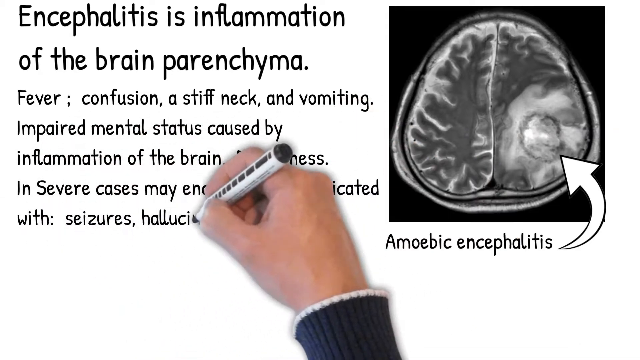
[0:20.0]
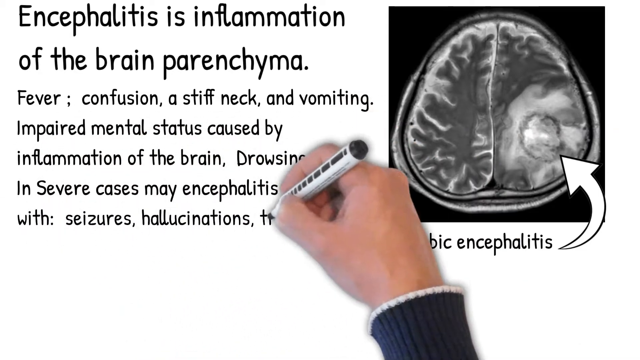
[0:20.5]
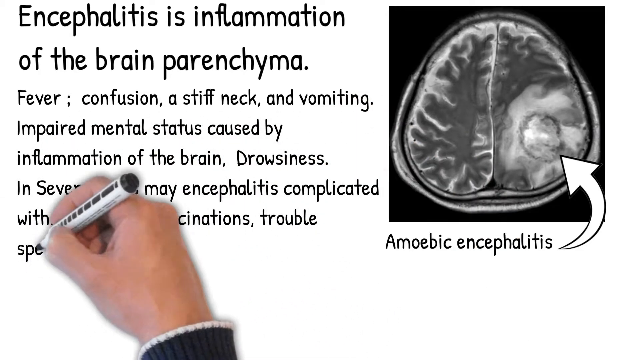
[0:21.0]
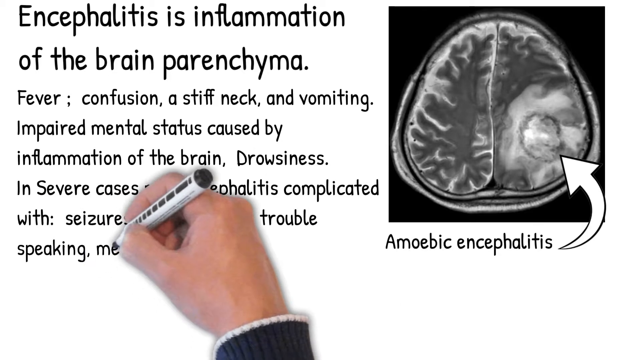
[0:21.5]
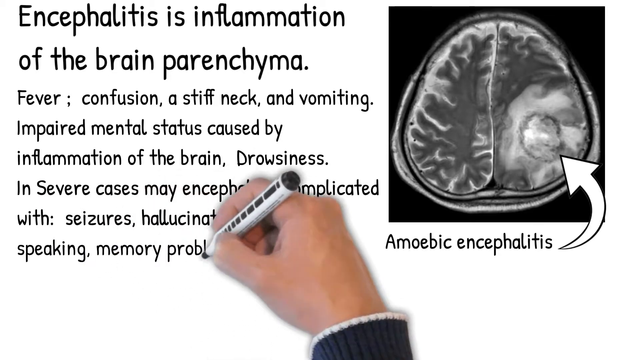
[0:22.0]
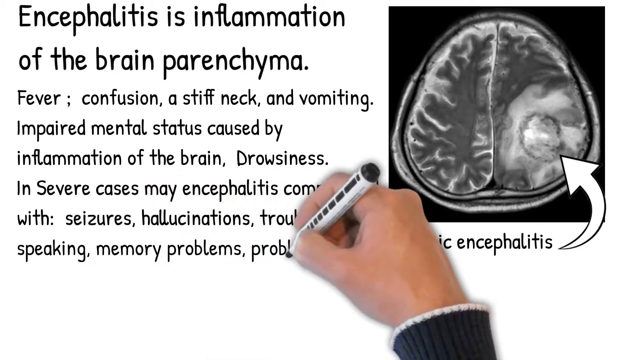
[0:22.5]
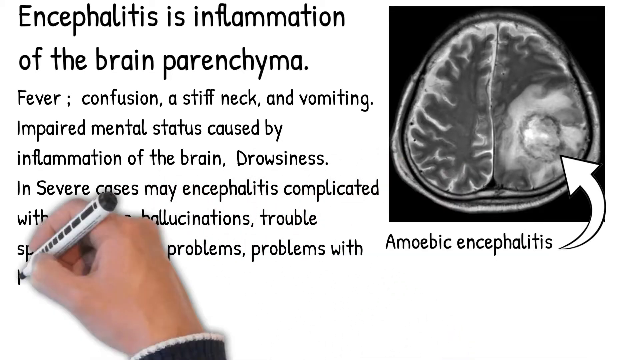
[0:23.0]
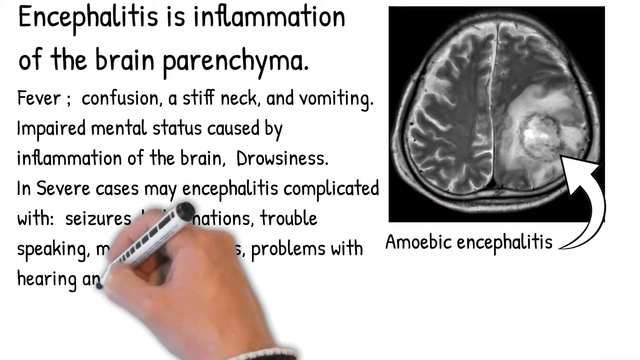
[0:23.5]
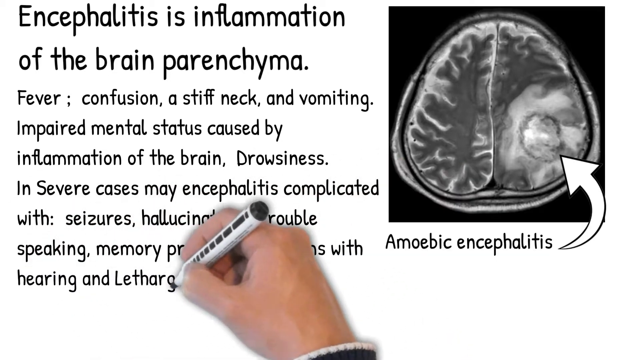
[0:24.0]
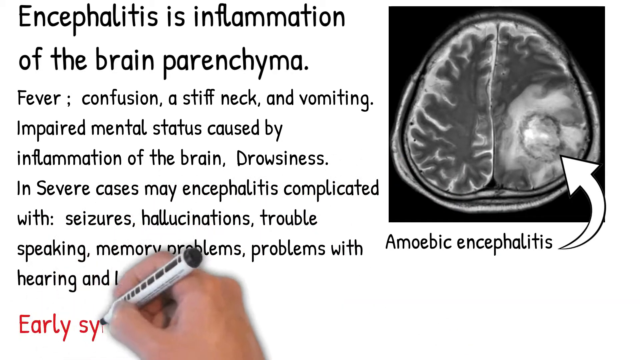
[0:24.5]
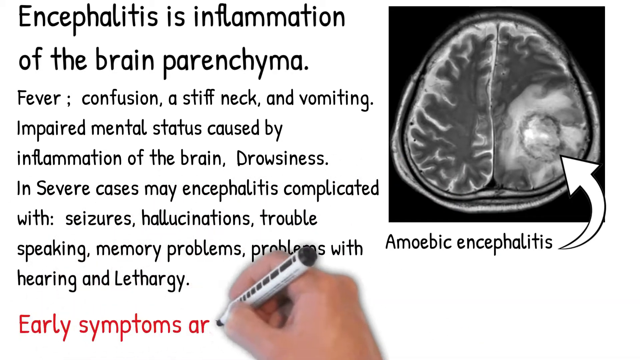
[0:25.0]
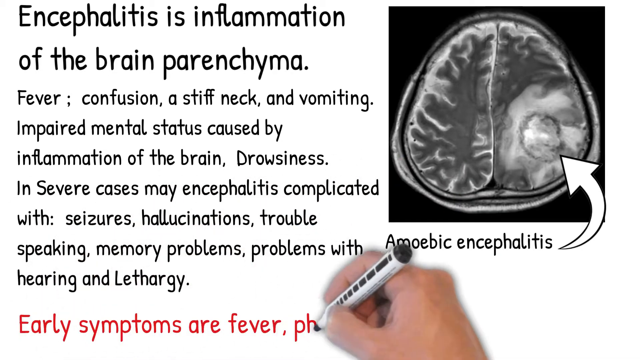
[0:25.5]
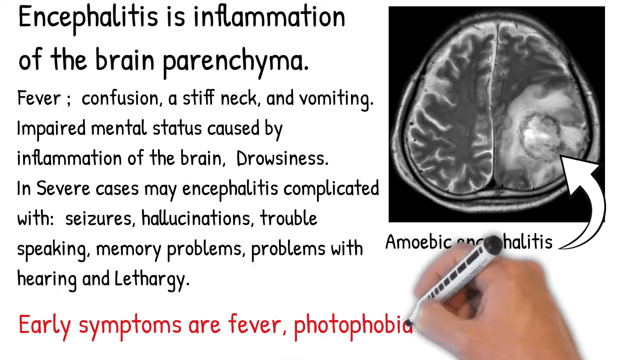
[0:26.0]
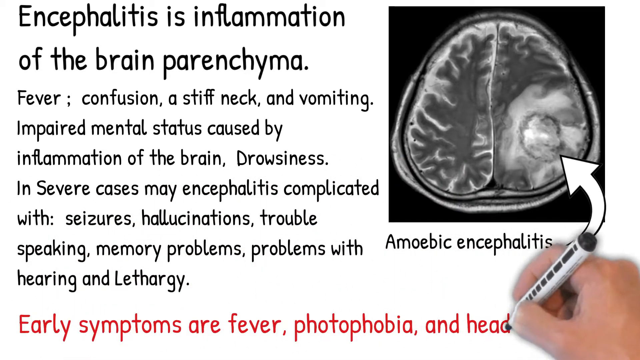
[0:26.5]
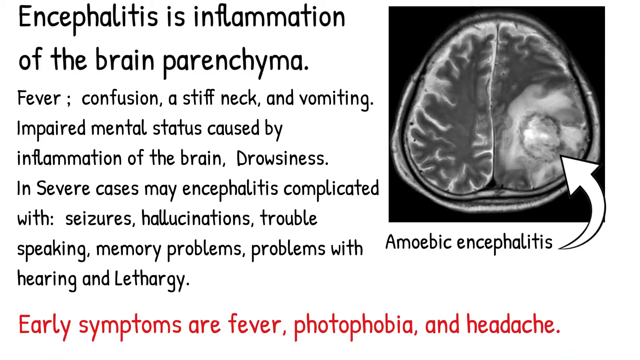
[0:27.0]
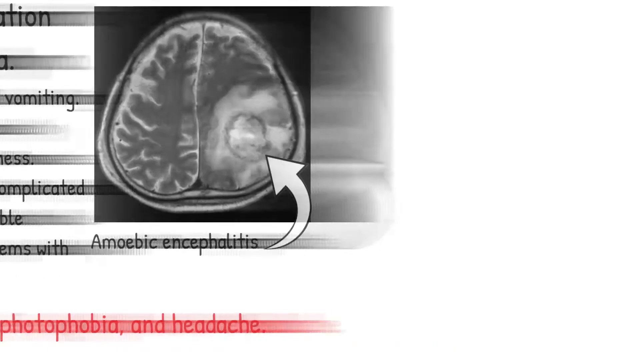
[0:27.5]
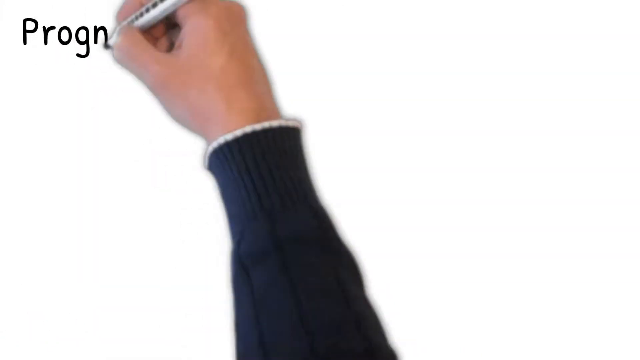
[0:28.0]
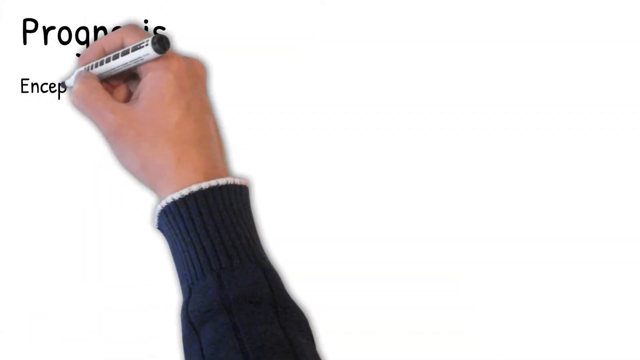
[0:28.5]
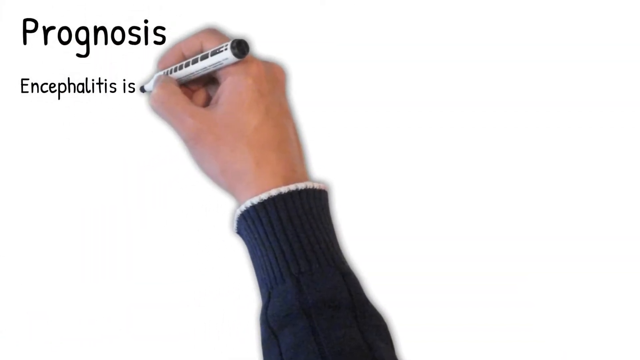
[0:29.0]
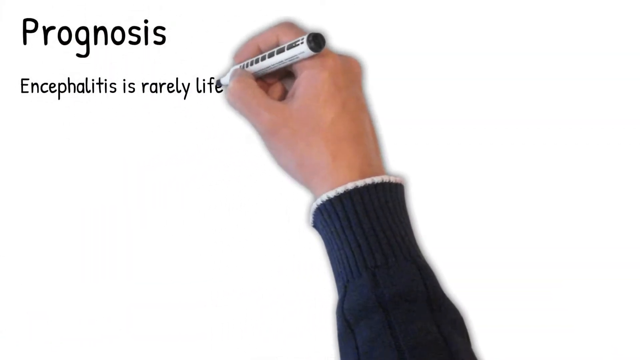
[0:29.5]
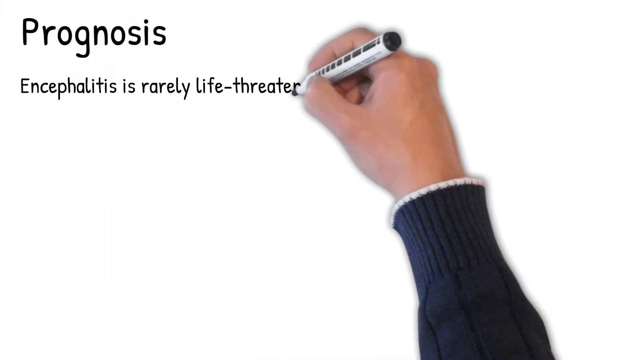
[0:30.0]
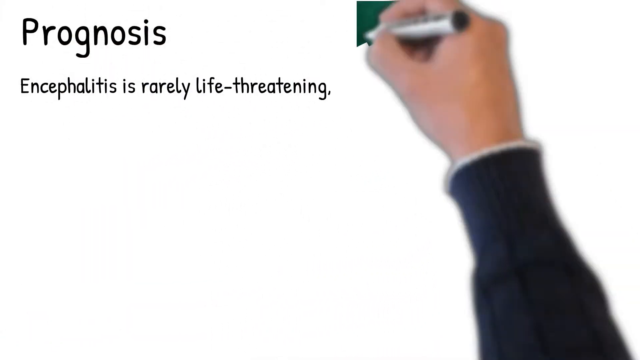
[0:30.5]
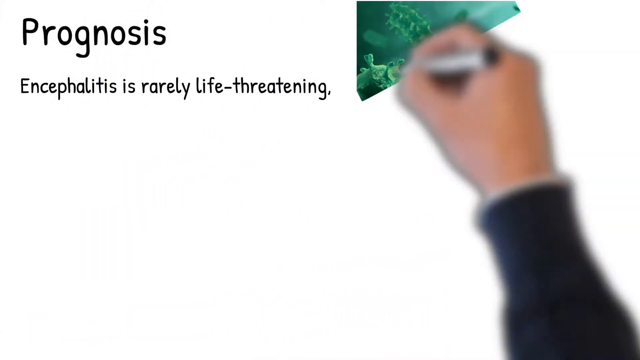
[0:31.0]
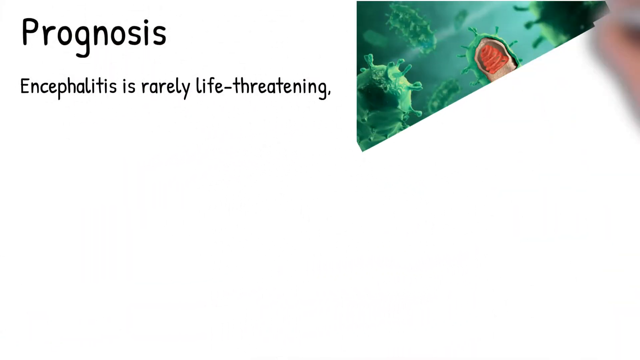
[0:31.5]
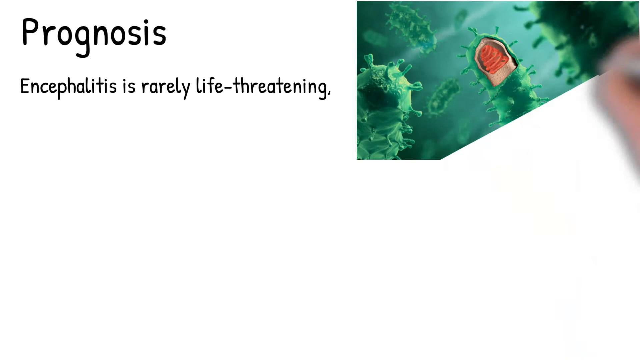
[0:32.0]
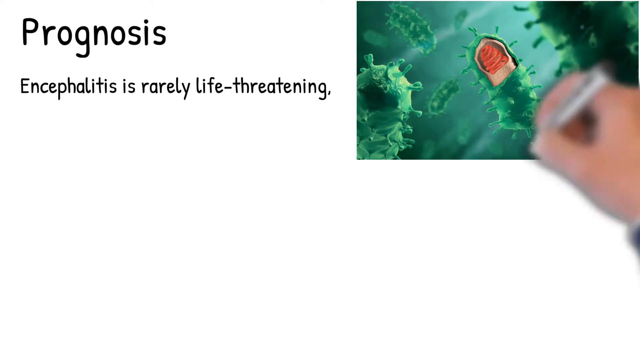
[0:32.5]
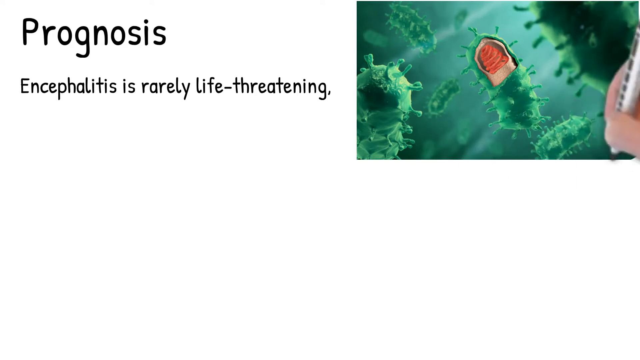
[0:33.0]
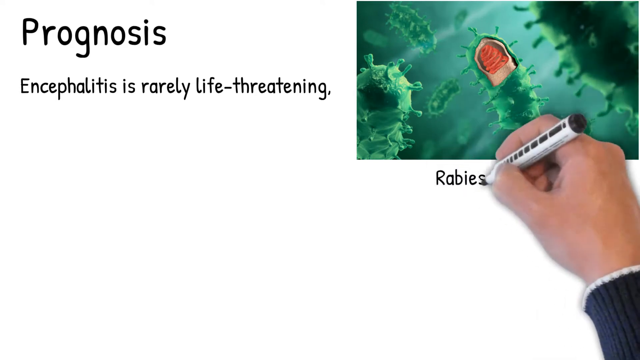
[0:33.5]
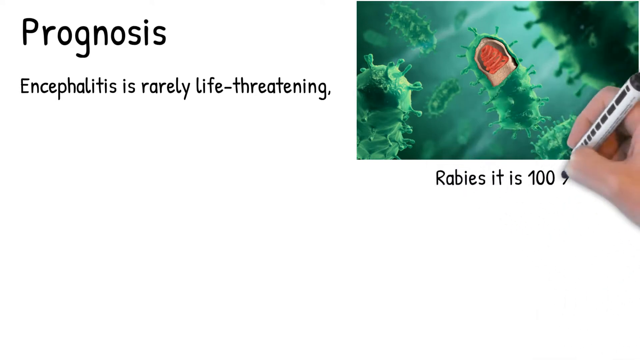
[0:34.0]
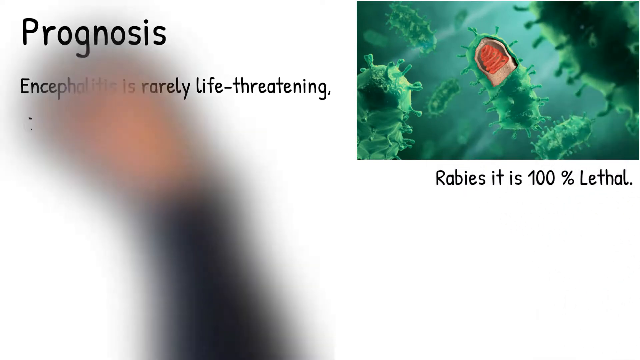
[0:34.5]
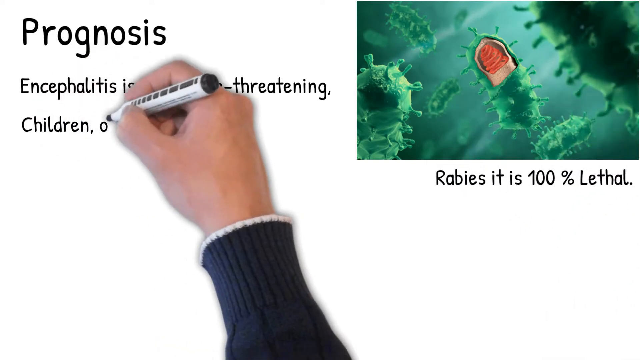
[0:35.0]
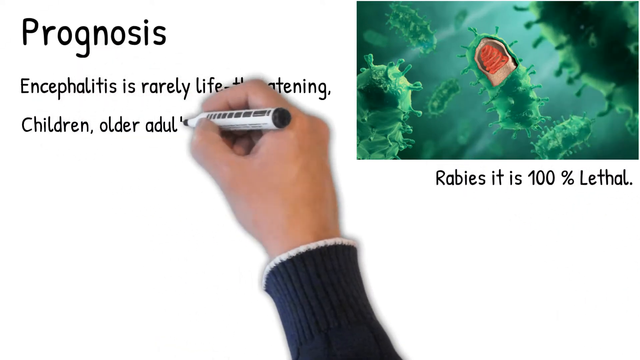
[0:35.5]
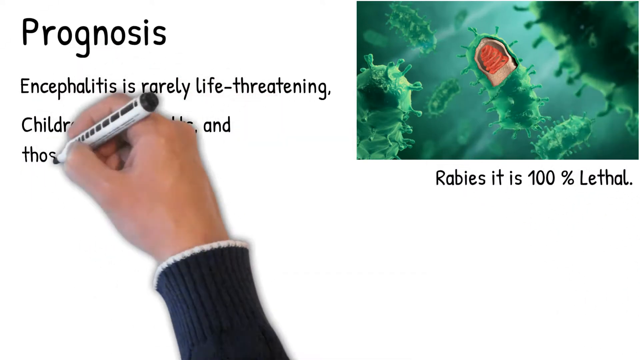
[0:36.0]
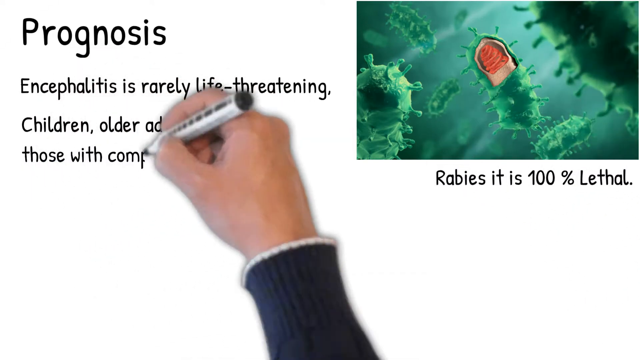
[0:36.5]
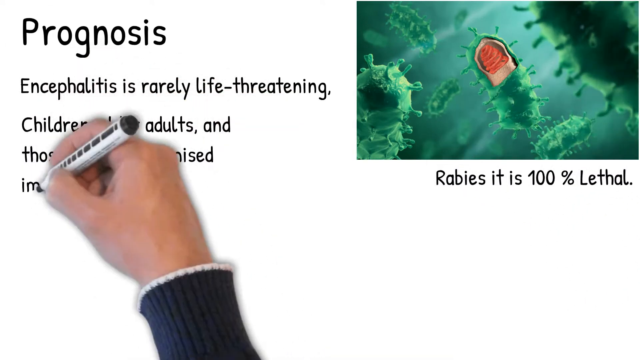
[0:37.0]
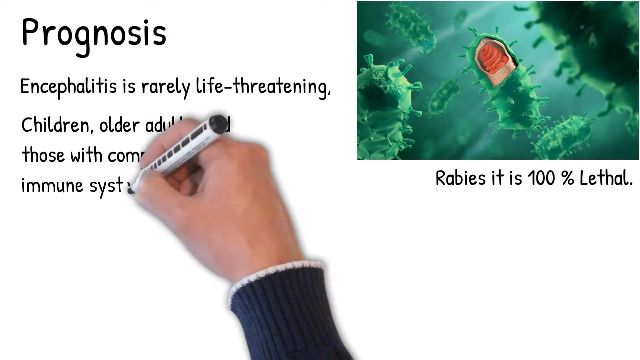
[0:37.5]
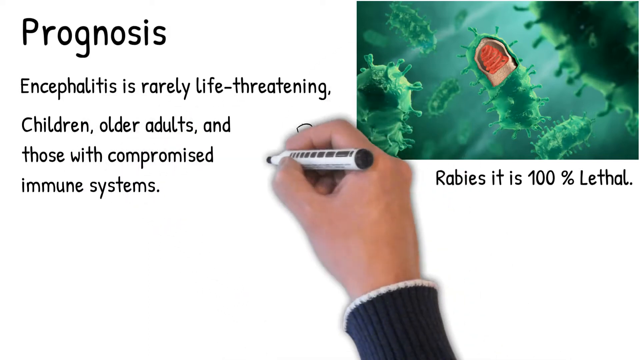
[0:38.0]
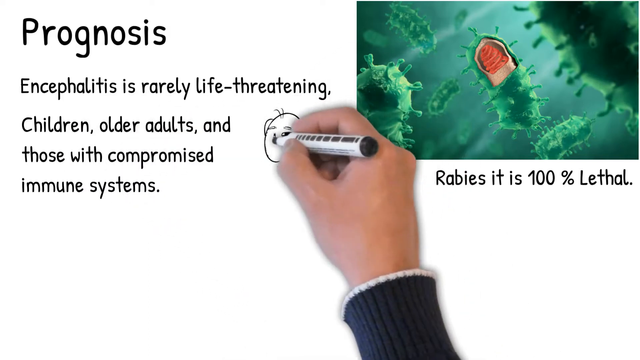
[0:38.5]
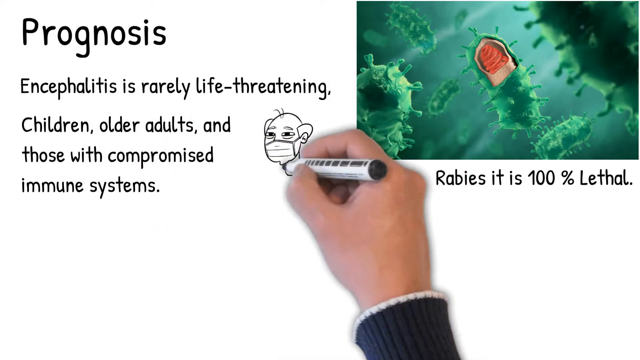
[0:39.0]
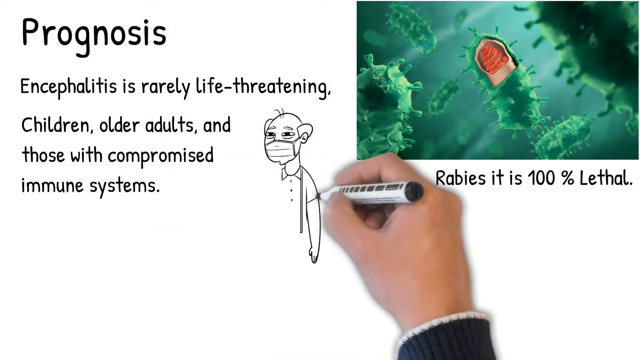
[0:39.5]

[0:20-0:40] The writing continues: "severe cases may be complicated with seizures, hallucinations, trouble speaking, memory problems, problems with hearing, and lethargy", followed by the early symptoms of the disease: fever, photophobia and headache. The prognosis for encephalitis is given as "rarely life-threatening". A colored picture is then drawn of what looks like the organism that causes the encephalitis: a green background with little green pokey things, and an inside that is cream-colored with a red center. This is rabies, and the text says it is "100% lethal". Further notes state that children, older adults and those with compromised immune systems could be more affected, but most people will recover.